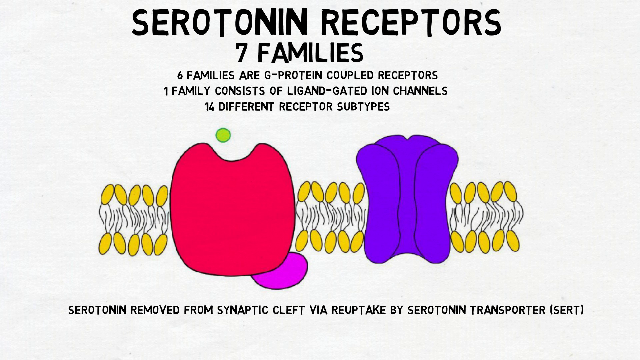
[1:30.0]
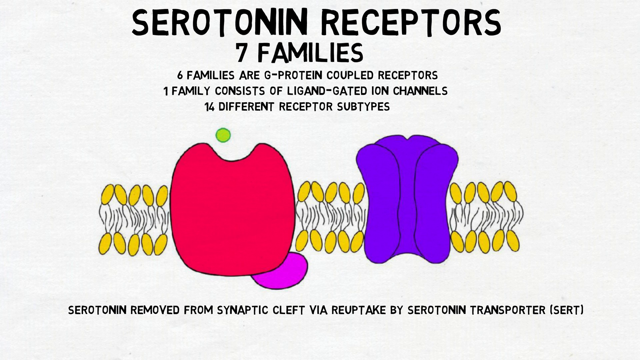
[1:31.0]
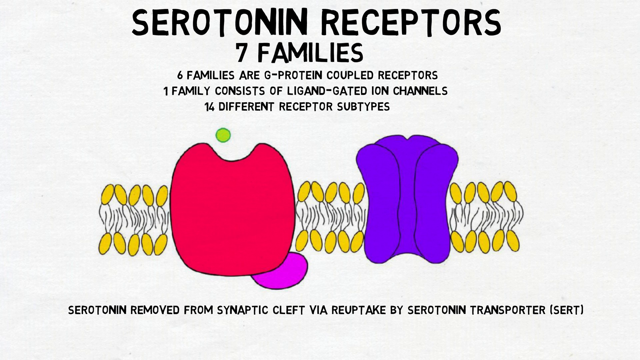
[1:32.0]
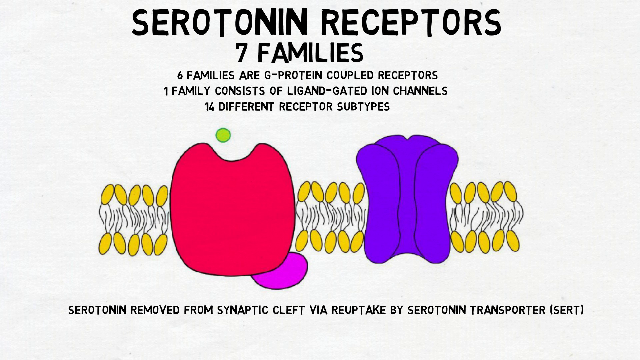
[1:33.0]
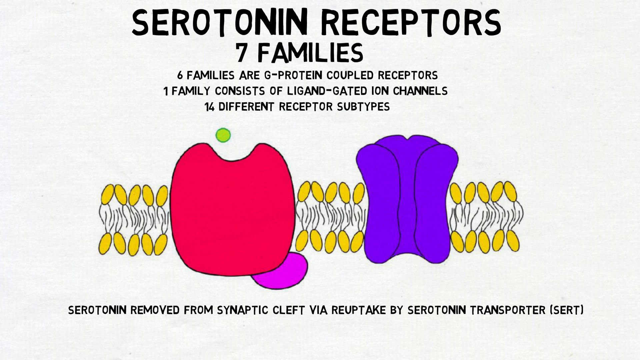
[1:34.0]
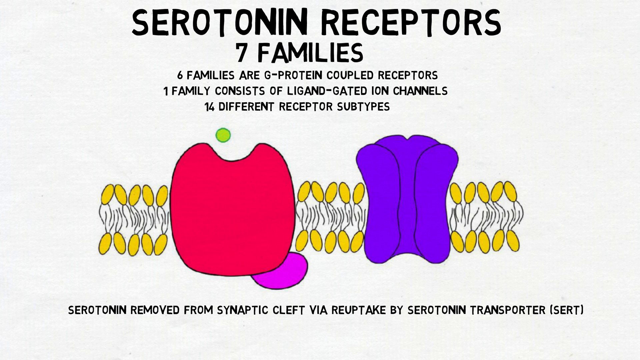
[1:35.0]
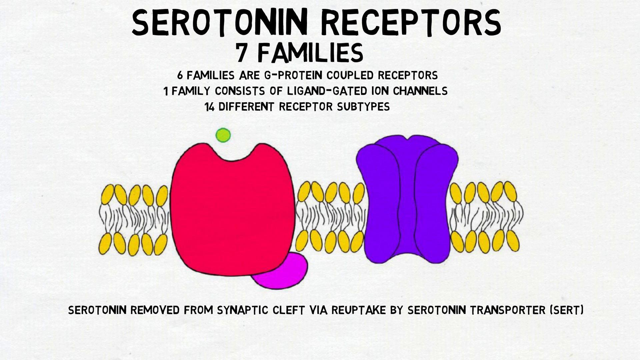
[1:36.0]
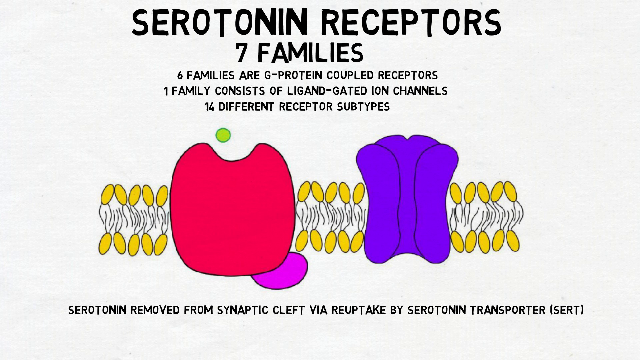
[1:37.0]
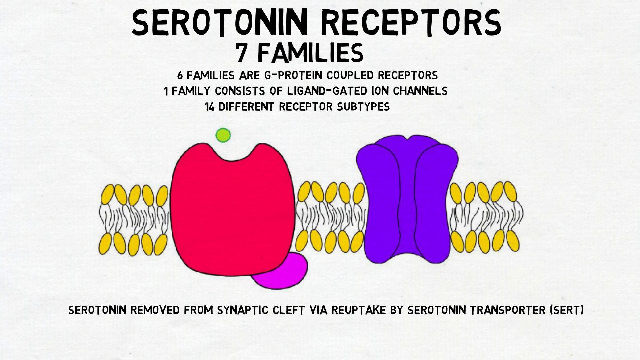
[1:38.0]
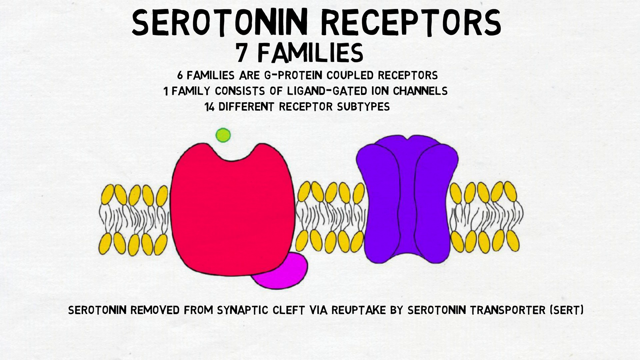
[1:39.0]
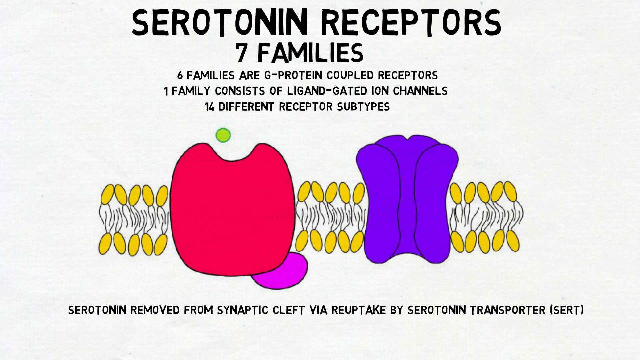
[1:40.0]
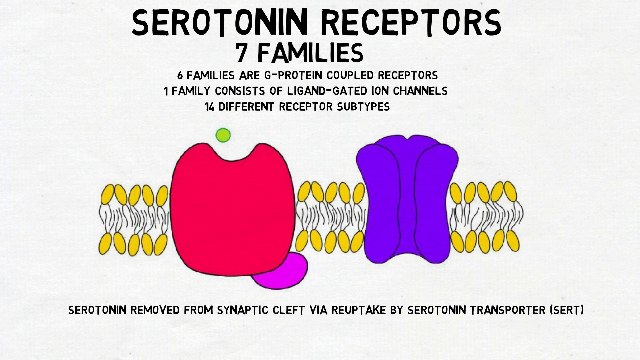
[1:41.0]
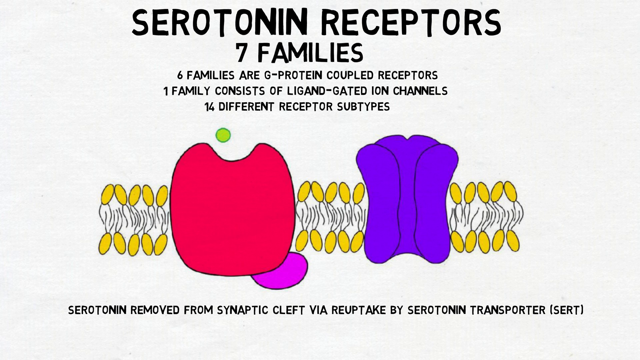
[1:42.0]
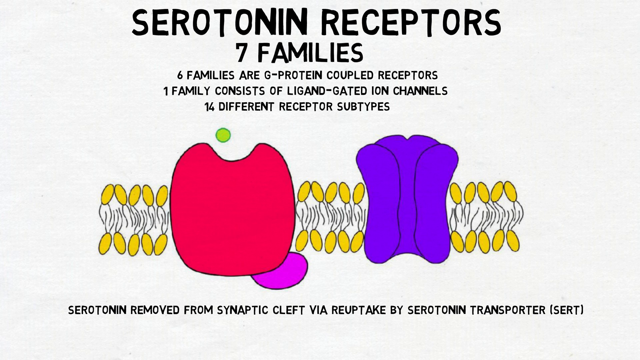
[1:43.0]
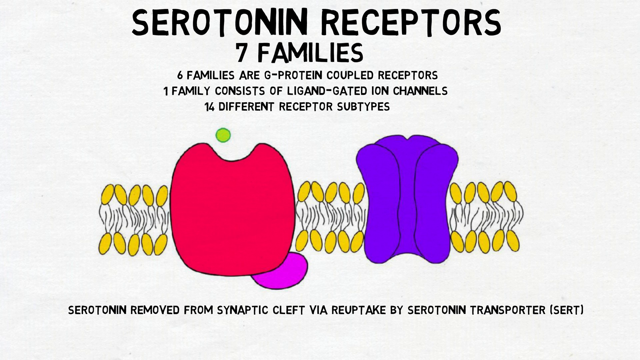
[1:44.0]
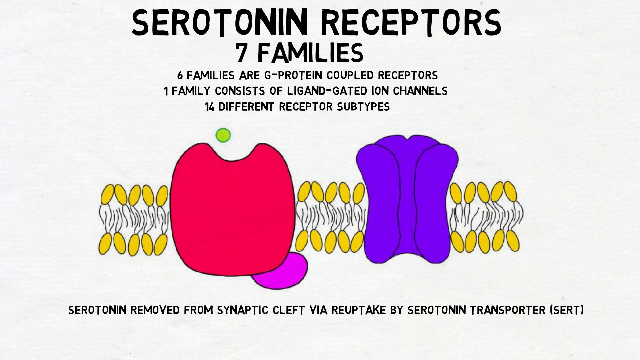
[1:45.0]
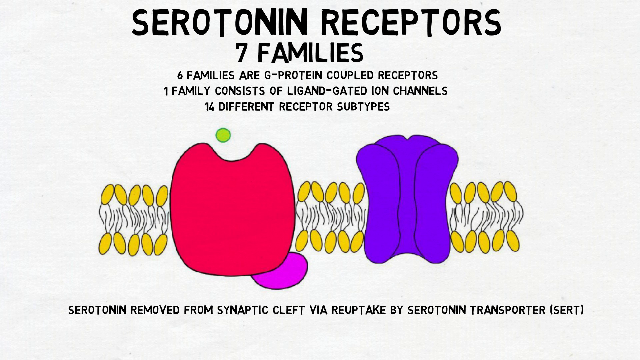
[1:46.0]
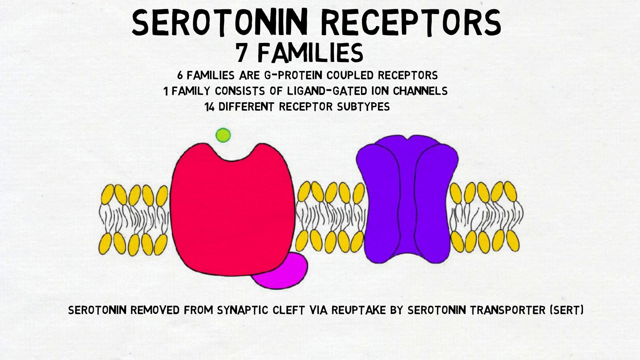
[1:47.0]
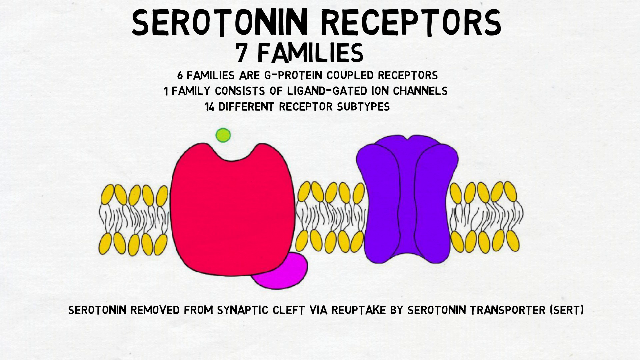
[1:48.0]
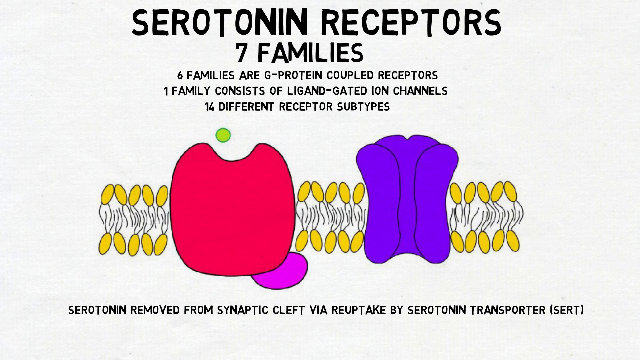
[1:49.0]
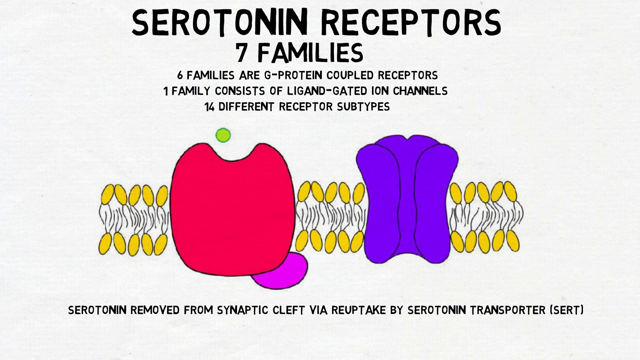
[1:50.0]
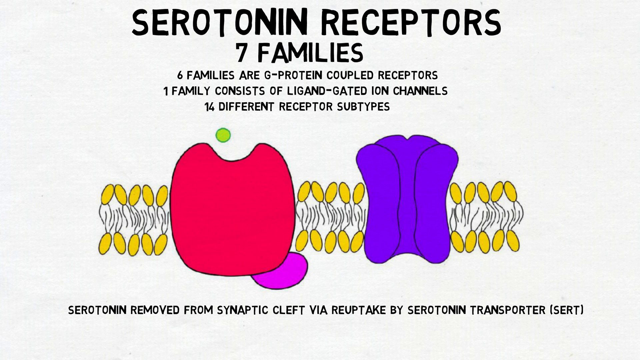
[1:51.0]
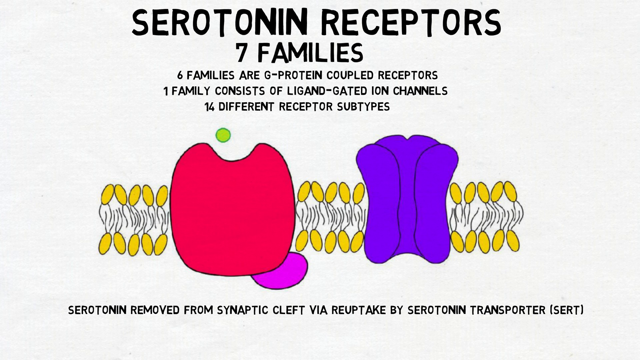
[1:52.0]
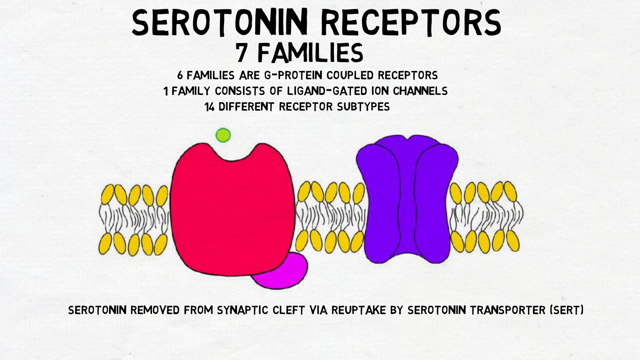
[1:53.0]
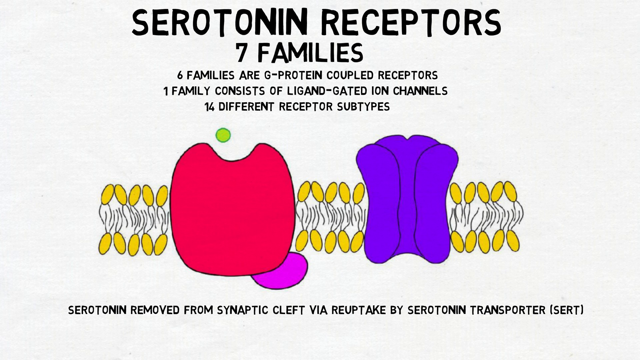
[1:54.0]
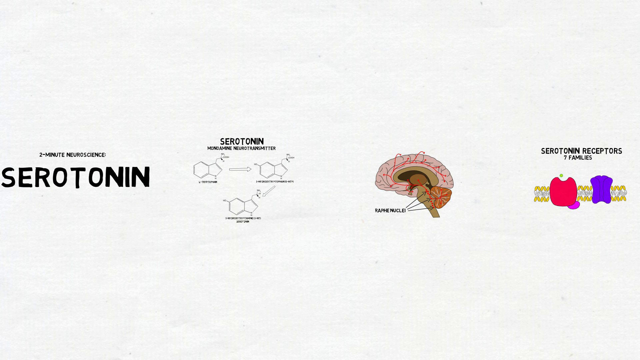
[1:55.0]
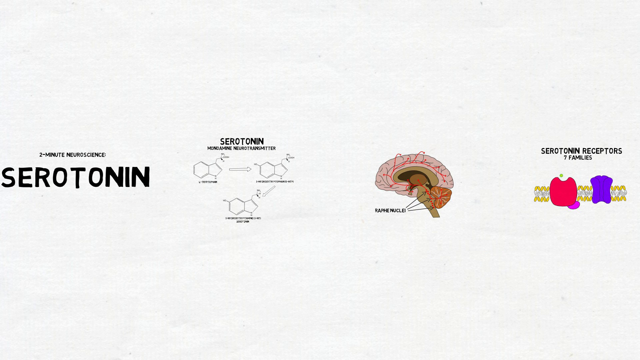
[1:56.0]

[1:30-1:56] The white screen has "serotonin receptors" and "seven families" written in black at the very top, with "six families are g protein coupled receptors" underneath, then "one family consists of ligand gated ion channels," then "one fourth different receptor subtypes." Below that, in the middle of the screen on the left, is a bright red design that looks like an apple with a small green dot floating above it. To its right is a purple, smaller, skinnier design that is also apple-shaped. Wiggly lines going from top to bottom, with small yellow ovals at their tips, connect the two shapes. Underneath the designs, written in black, it says "serotonin removed from synaptic cleft via reuptake by serotonin transporter," followed by the word "Sert" in parentheses.